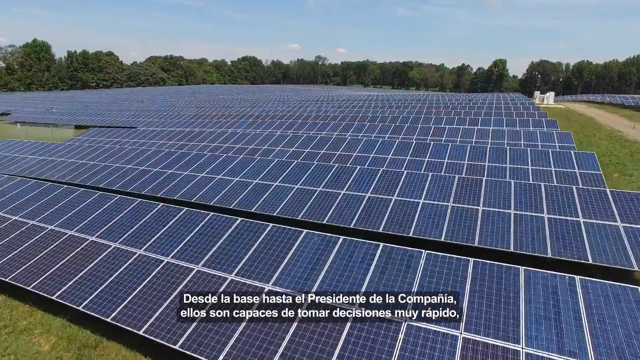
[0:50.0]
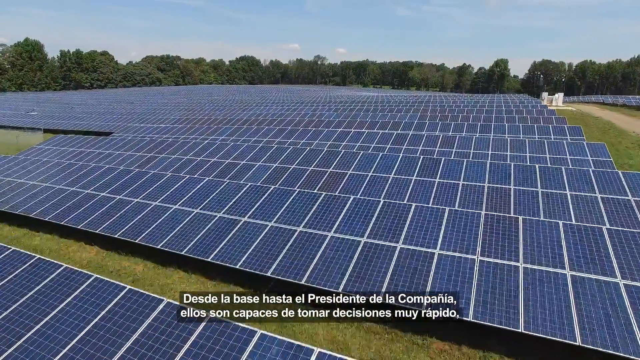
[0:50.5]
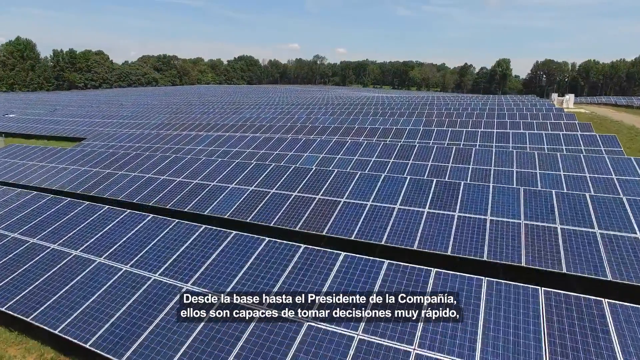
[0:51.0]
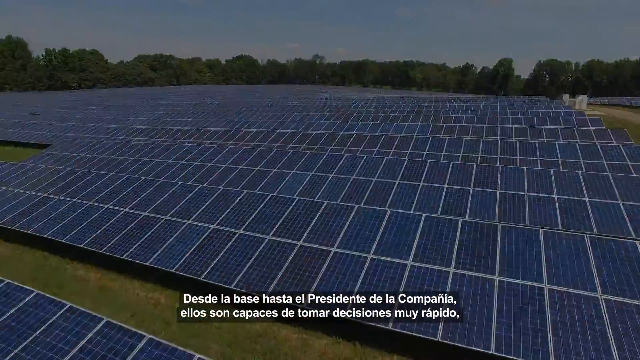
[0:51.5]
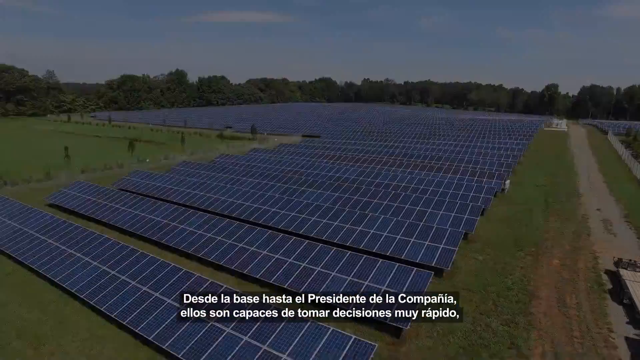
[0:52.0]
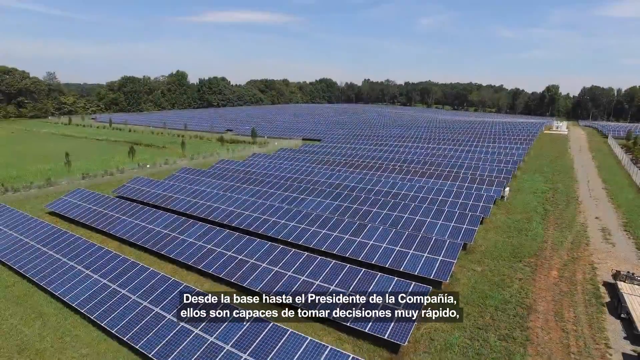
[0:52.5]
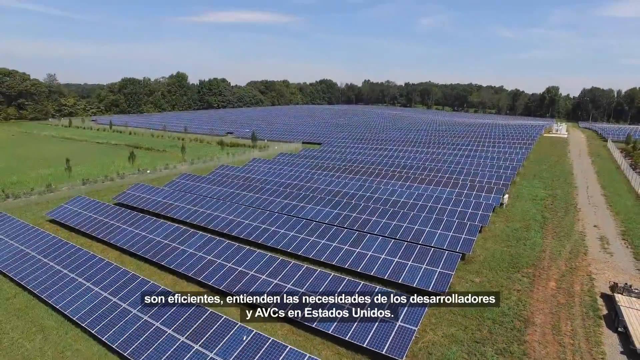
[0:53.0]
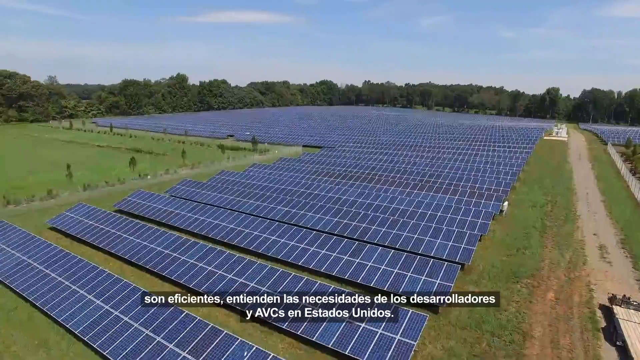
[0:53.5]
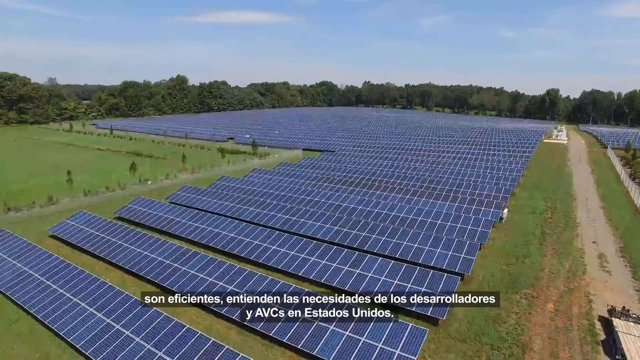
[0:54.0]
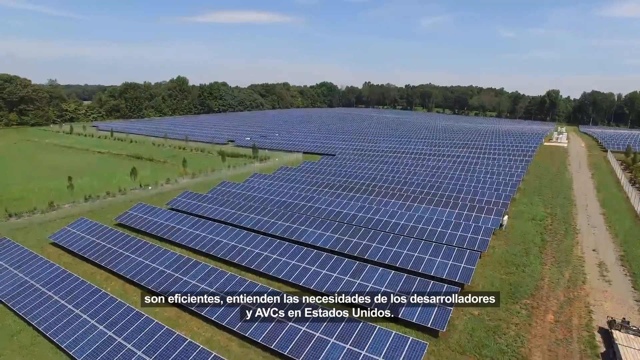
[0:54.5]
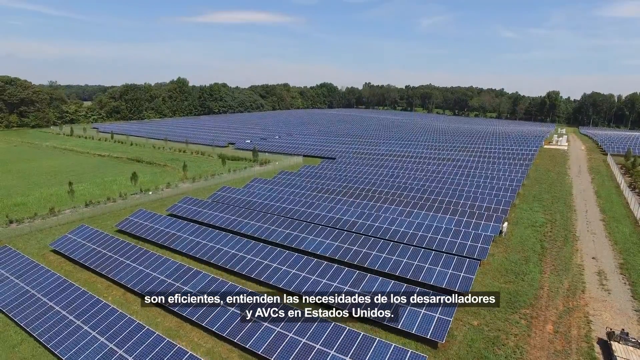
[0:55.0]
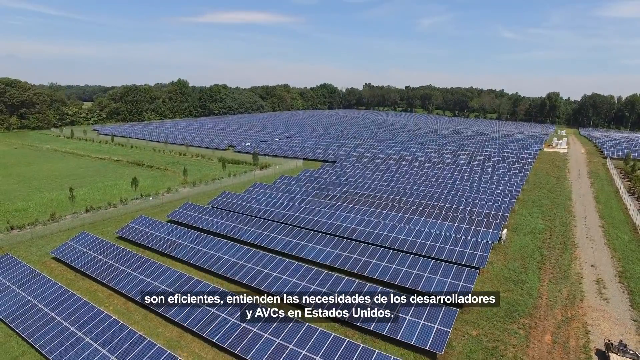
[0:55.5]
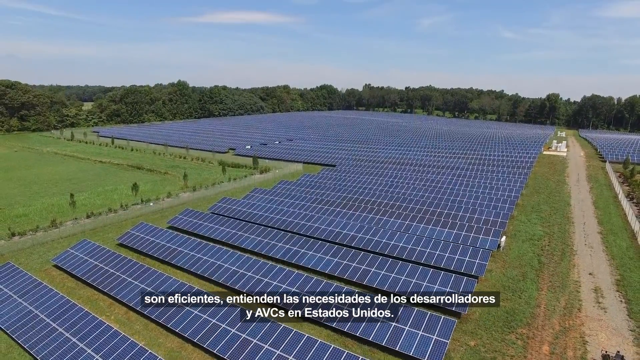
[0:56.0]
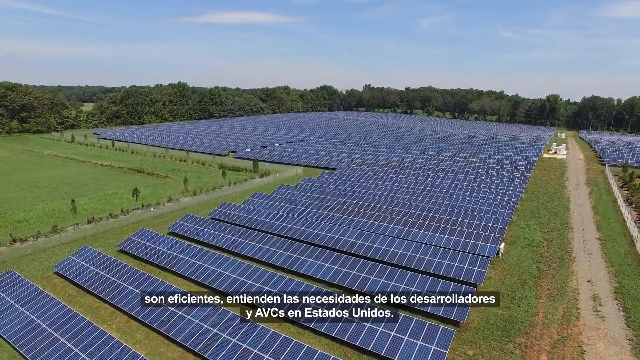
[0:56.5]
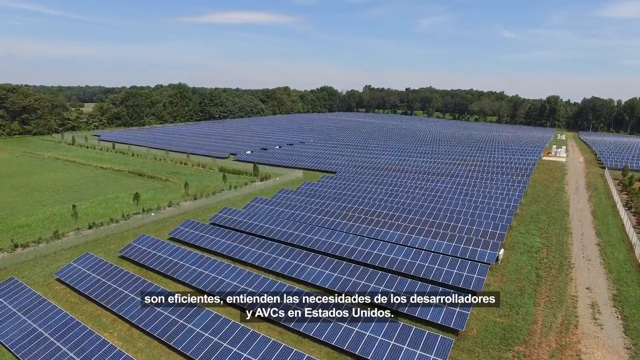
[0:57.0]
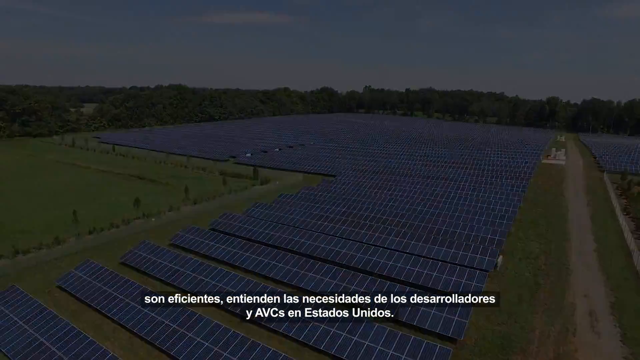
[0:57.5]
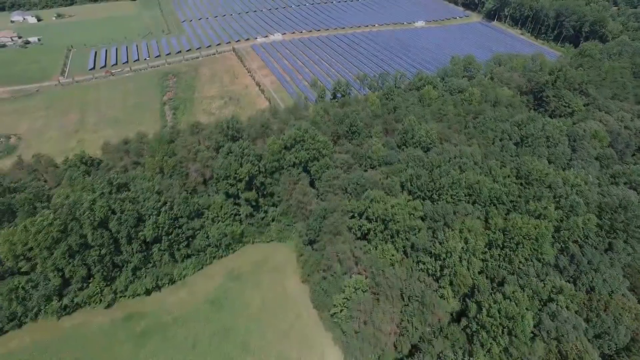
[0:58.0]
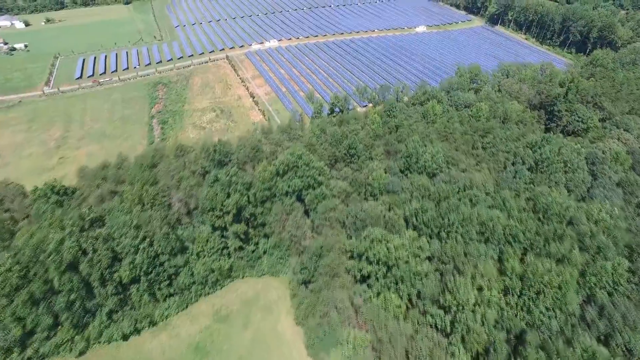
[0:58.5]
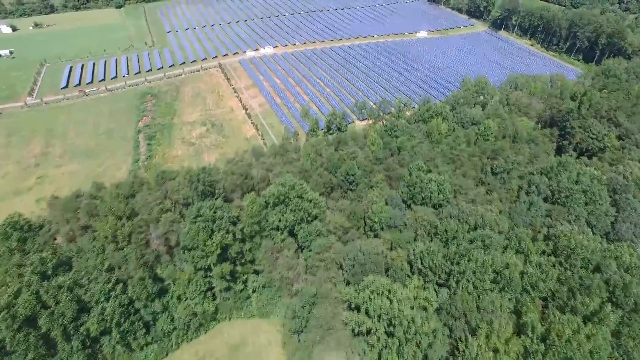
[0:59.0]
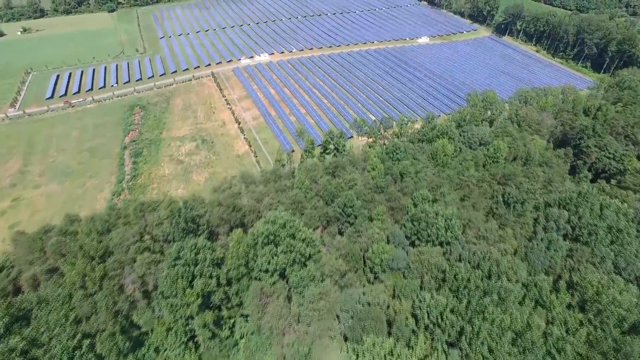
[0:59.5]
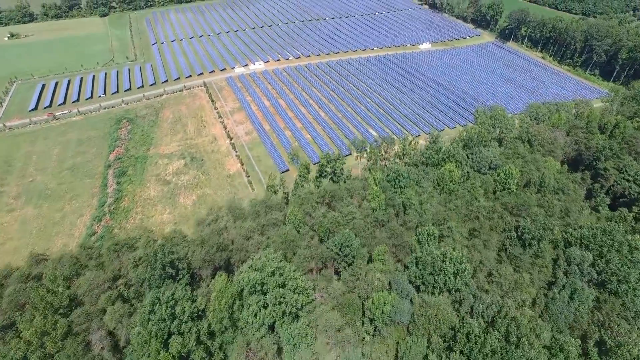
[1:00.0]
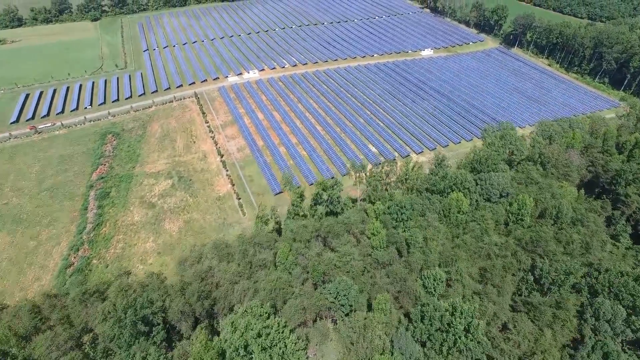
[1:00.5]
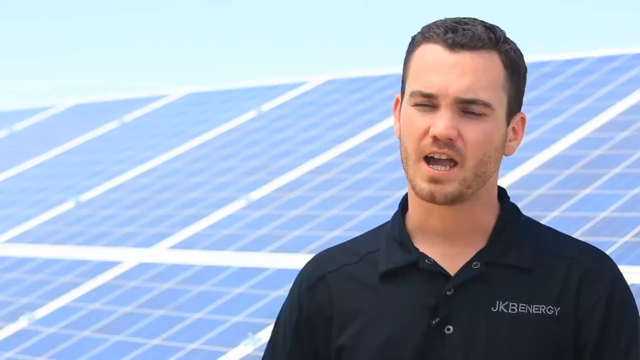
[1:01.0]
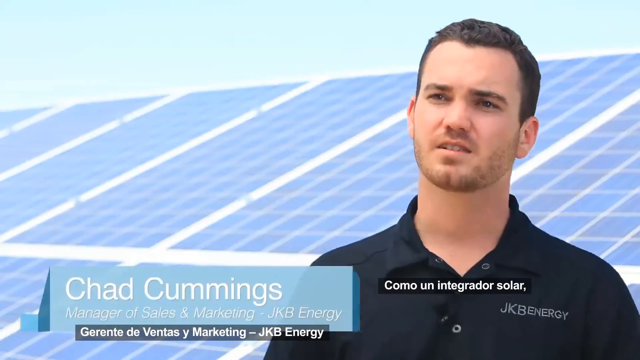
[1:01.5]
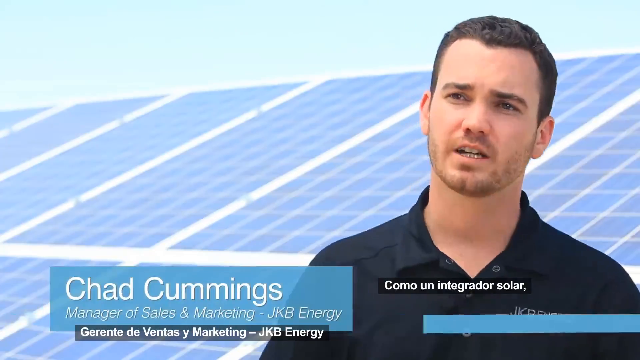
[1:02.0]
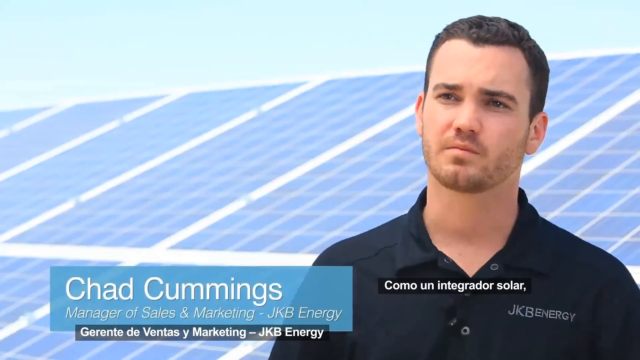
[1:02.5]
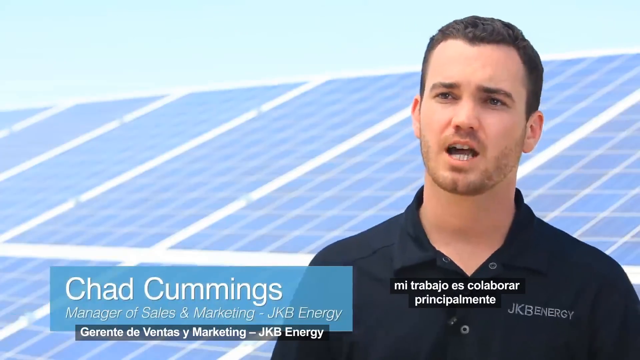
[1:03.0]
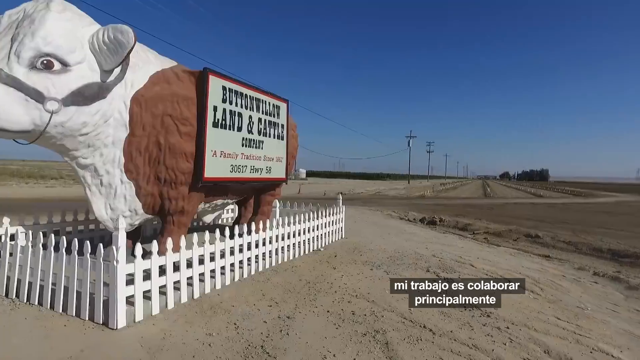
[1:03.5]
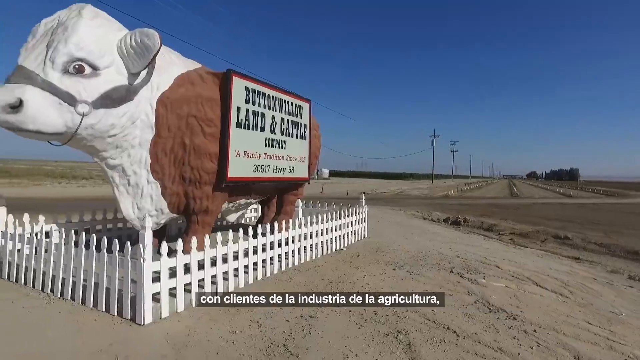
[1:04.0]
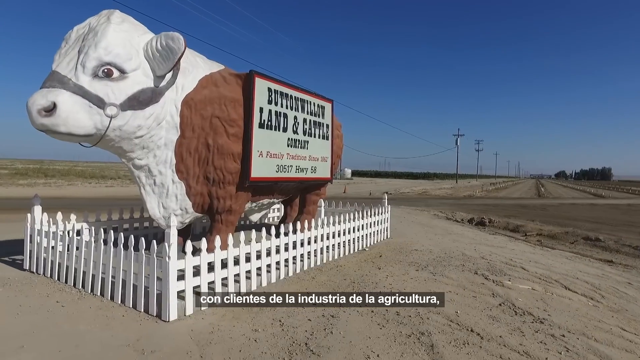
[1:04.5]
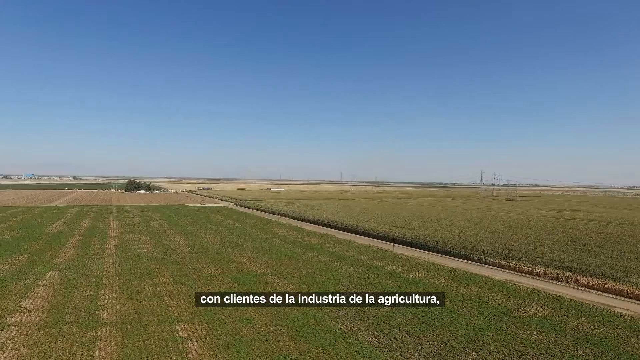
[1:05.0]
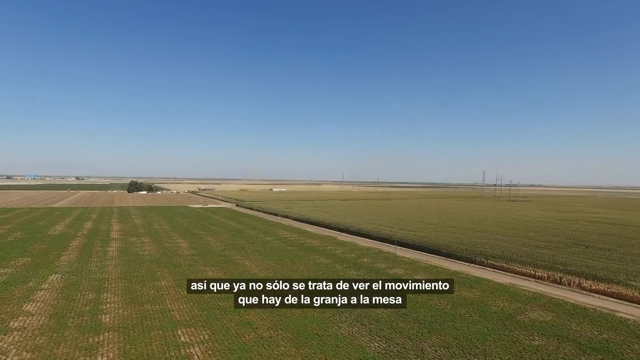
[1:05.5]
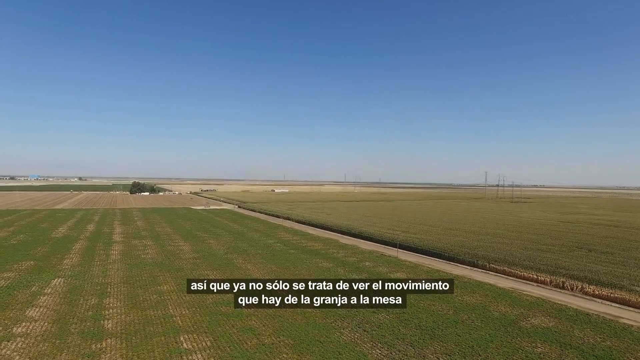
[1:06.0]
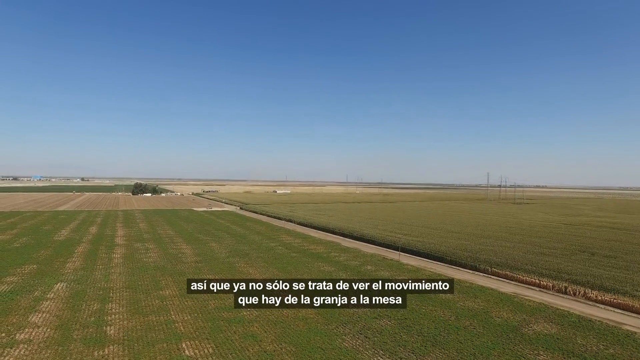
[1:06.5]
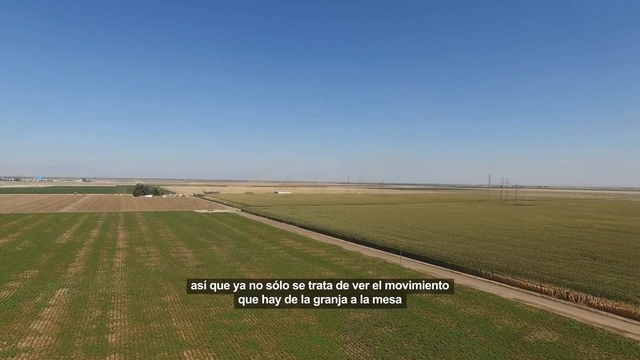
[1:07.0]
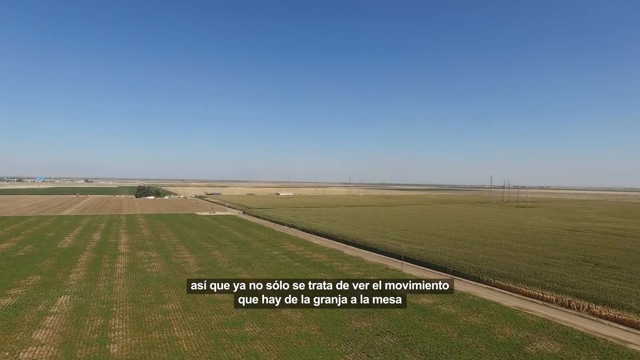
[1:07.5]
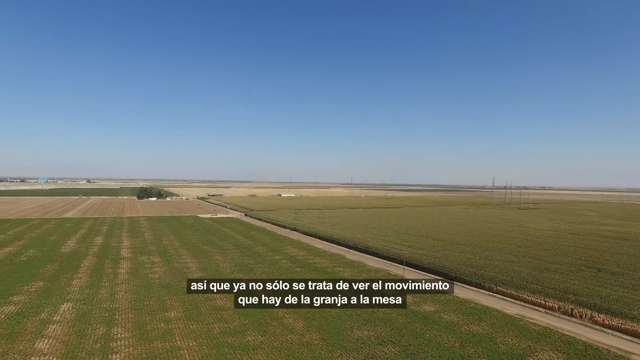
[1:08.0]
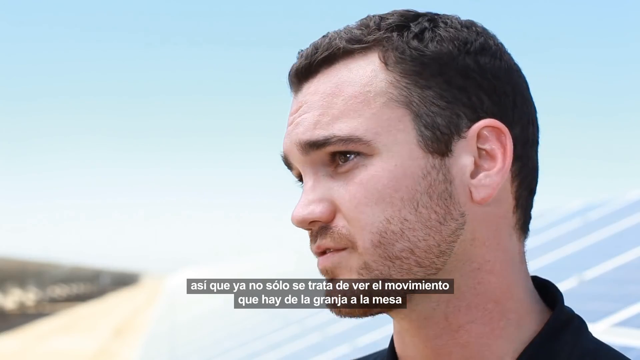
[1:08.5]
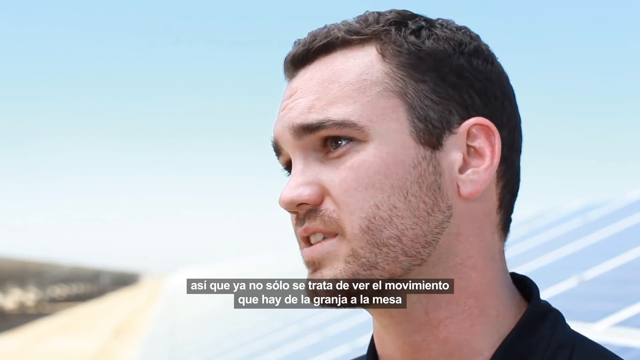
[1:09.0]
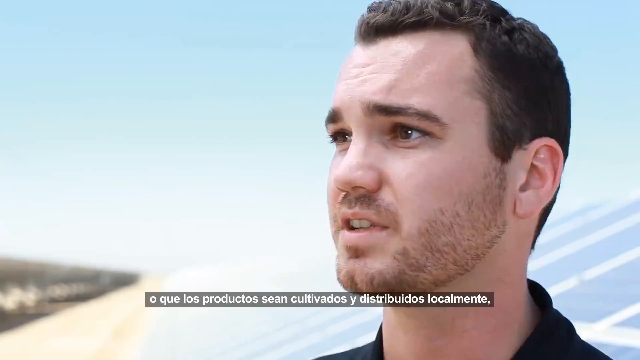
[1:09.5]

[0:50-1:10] A drone shot moves quickly past massive solar panels stretching long across green fields. Another drone shot slowly rises from the ground, showing how far the solar panels reach. The video cuts to another drone shot, even higher than the previous ones, quickly moving forward past the solar panels laid across the ground. Next, a man speaks to the camera, with a blue banner below him that states his name: "Jad Cummings, manager of sales and marketing at JKB Energy." He wears a black polo with JKB Energy on the left side and has dark brown hair and beard stubble. The video then cuts to a plastic cow with text on it that includes "willow, land, and cattle," "A family tradition," and "30517 Highway 58."